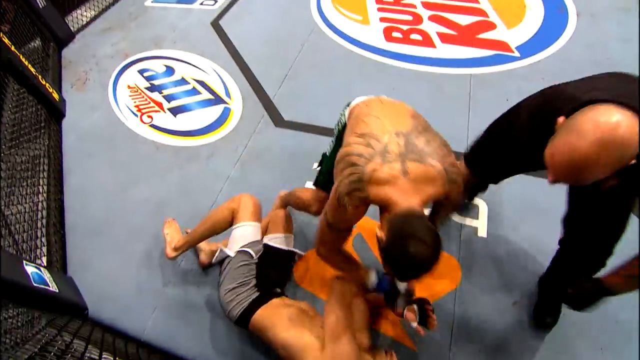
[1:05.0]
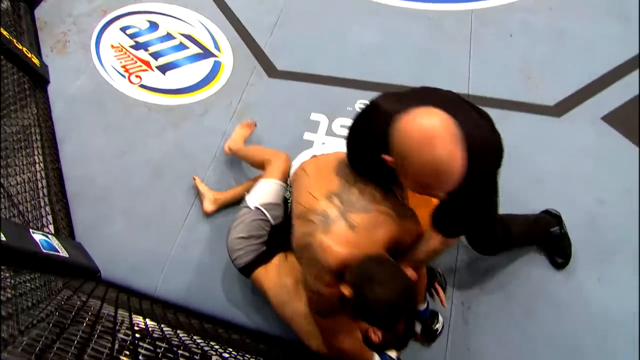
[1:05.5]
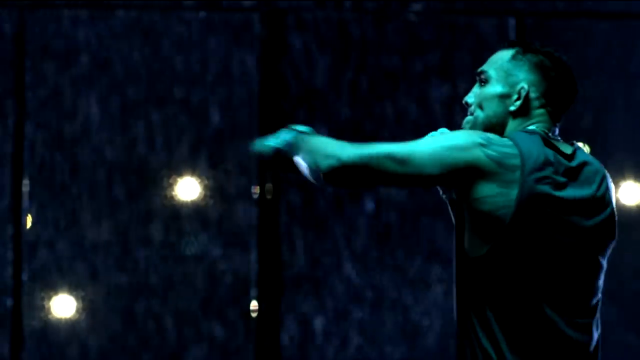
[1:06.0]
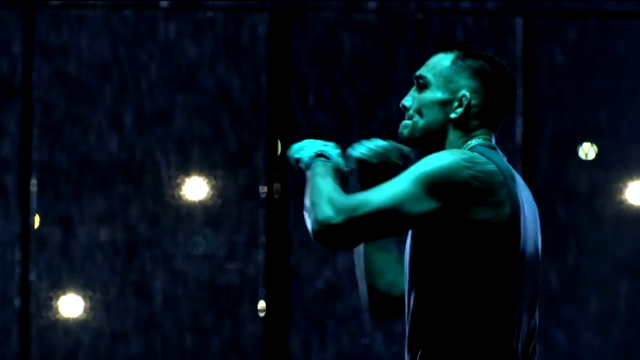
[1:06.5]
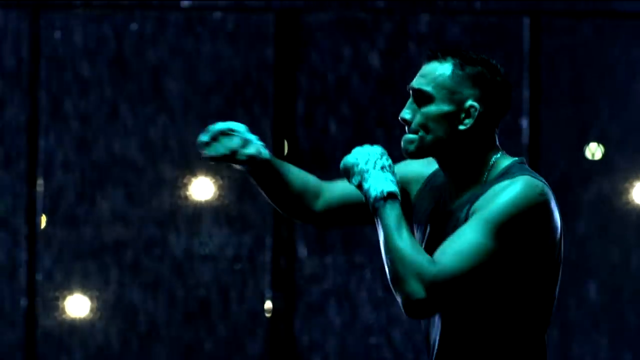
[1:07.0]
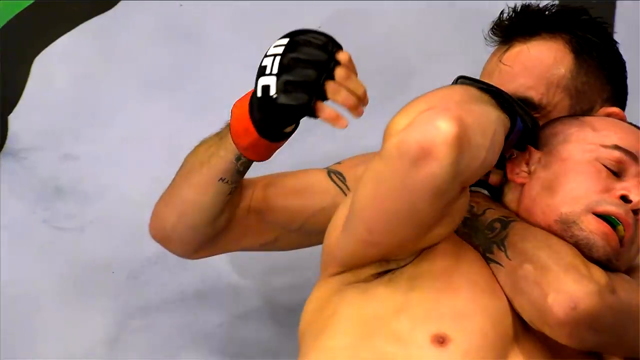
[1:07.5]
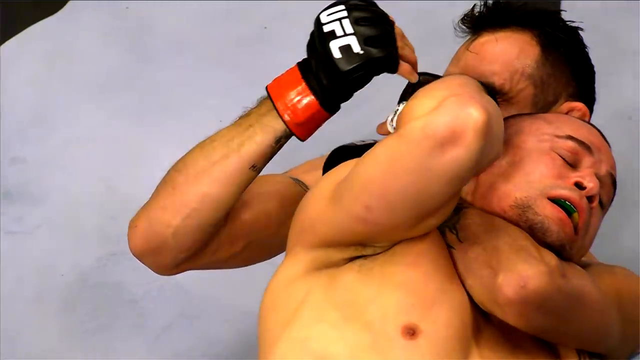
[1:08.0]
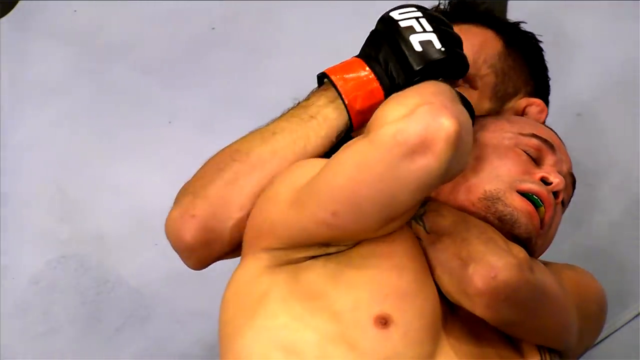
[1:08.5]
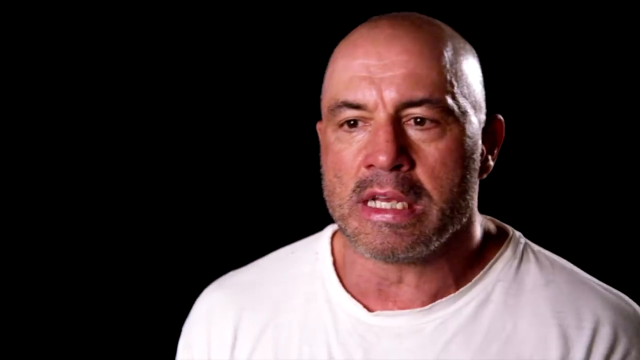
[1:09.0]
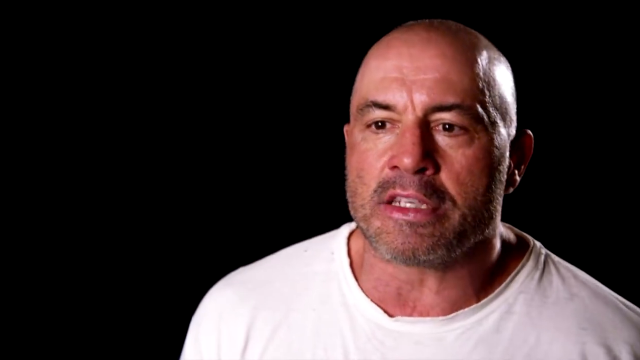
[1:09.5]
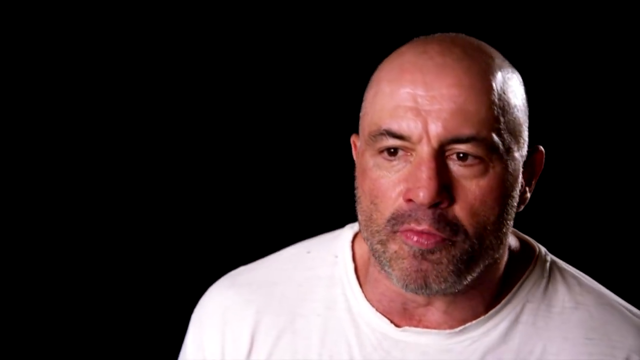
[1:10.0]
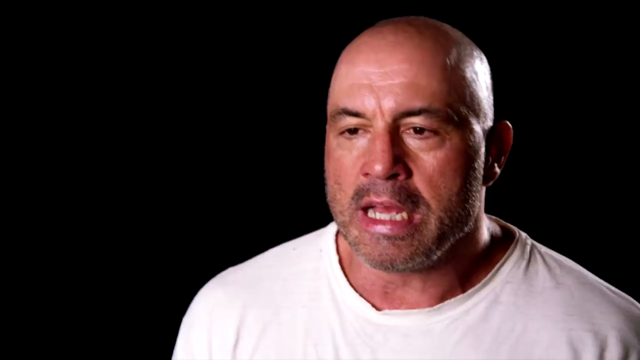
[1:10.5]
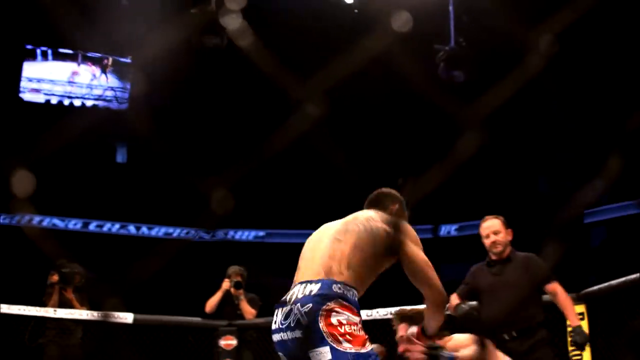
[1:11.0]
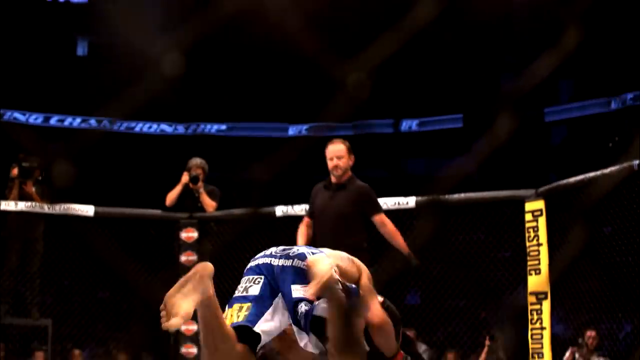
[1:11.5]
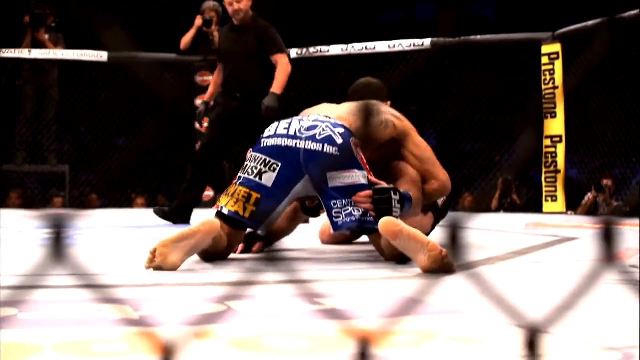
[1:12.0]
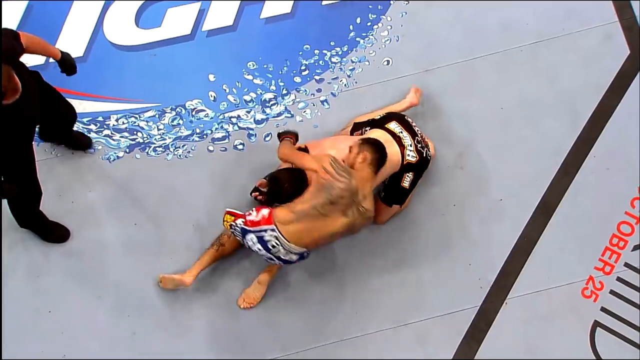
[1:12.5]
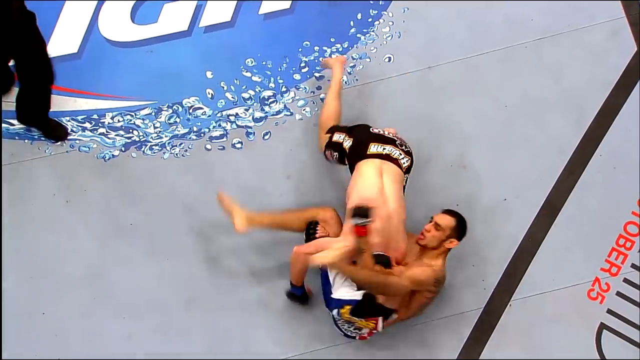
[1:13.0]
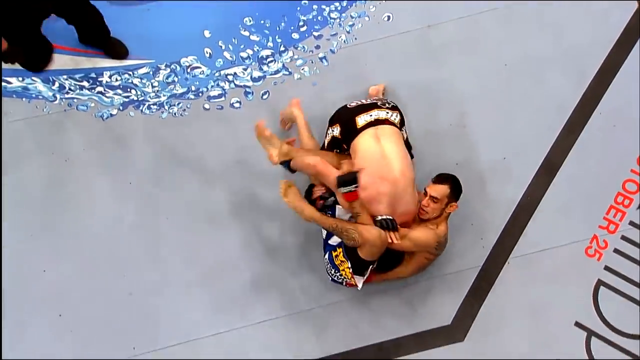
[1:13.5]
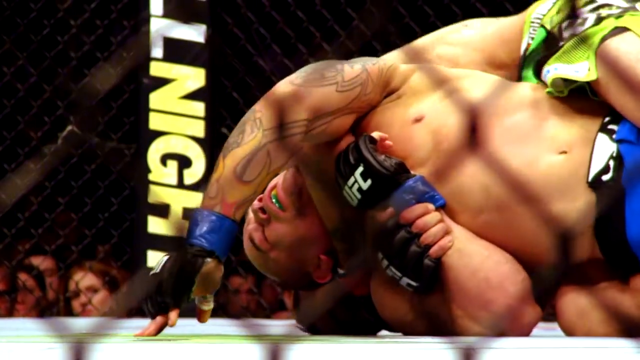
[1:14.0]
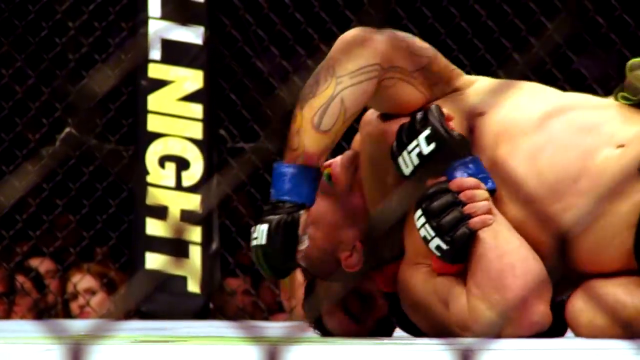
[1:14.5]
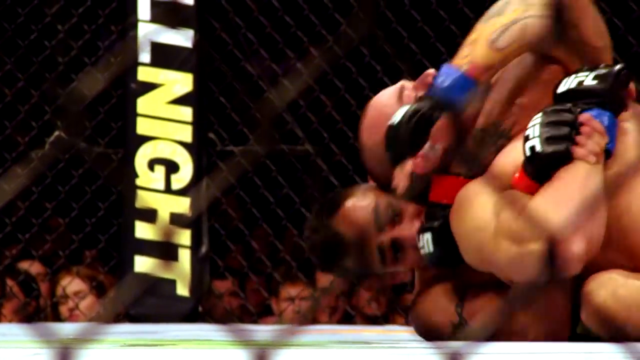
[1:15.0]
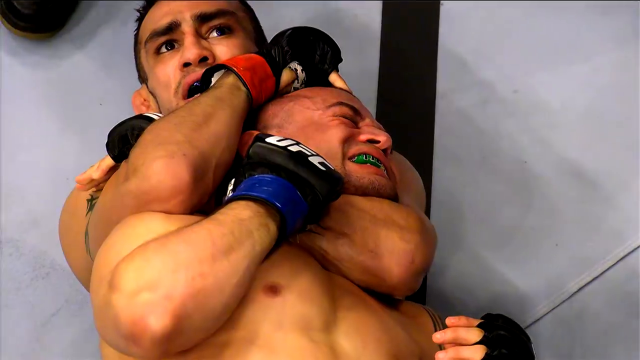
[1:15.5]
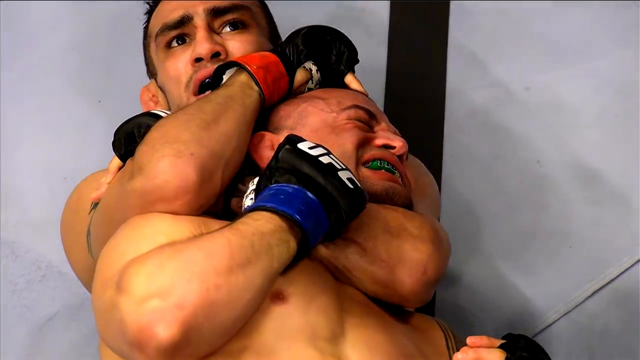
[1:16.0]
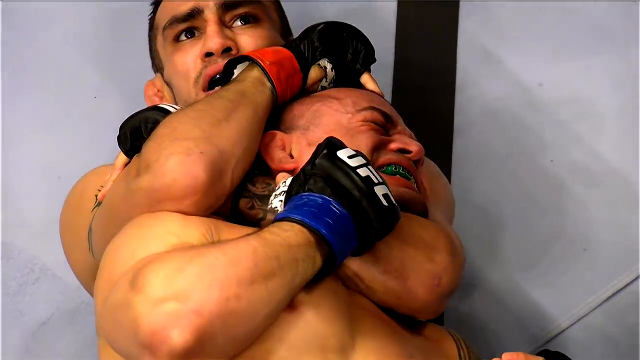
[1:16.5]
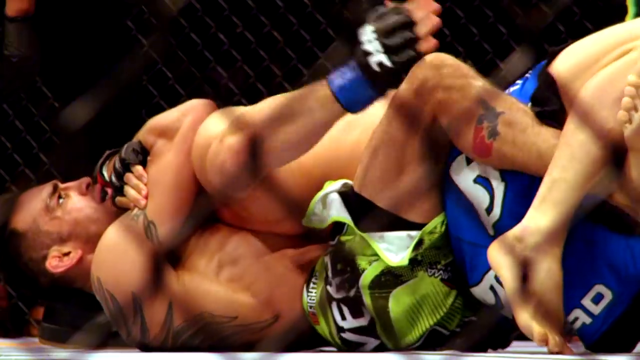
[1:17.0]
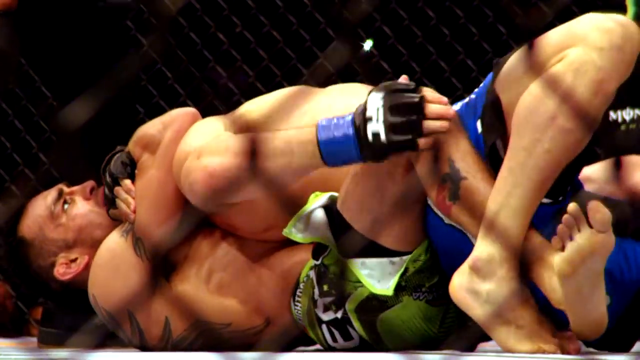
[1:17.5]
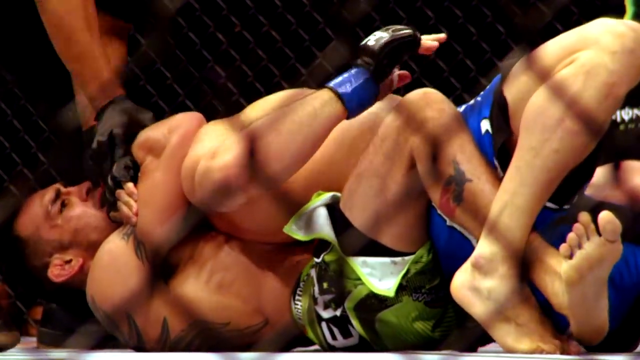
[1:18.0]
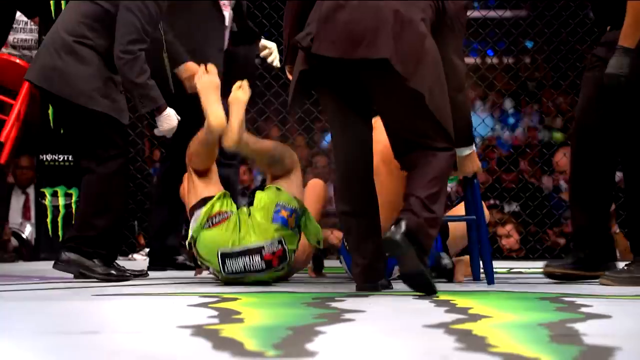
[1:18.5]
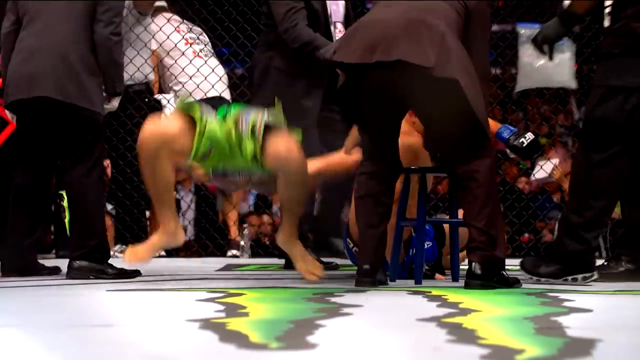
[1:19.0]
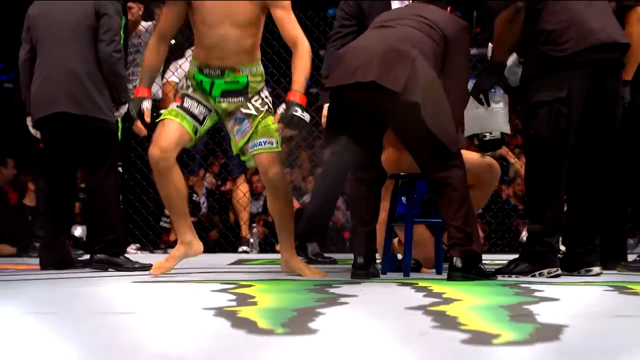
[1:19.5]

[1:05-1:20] Two shirtless UFC fighters wearing only shorts grapple in the center of the ring; one punches the other in the face and then chokes him. A promotional shot shows one of the fighters punching the air, then Joe Rogan's face appears: a fat old white man with a bald head and a scar on his forehead, apparently talking about the fighters. One fighter chokes another out on the ground, followed by clips of punching and grappling. The winner flips up from the ground, kind of showing off his athleticism. The fighters all wear knuckle gloves and shorts, punching, kicking and grappling on a ring with a white floor.